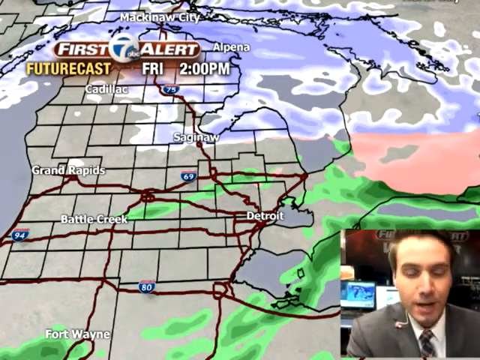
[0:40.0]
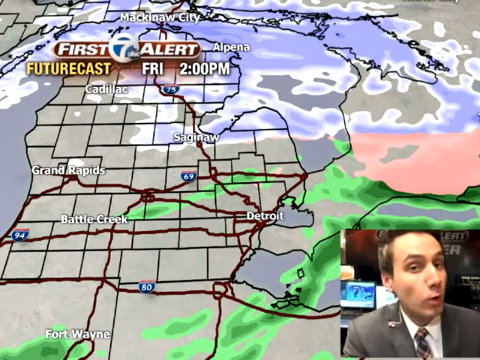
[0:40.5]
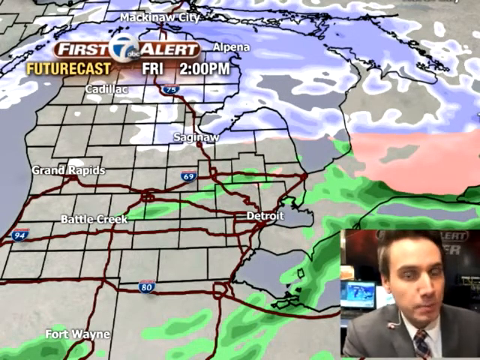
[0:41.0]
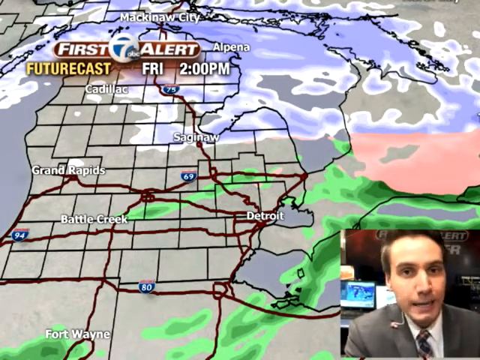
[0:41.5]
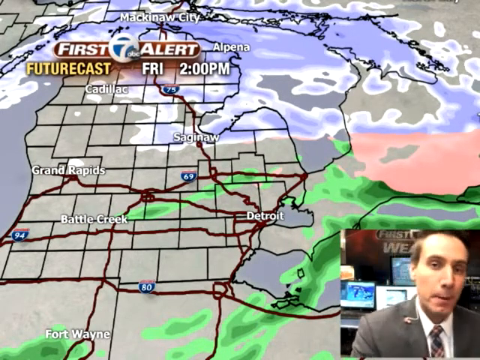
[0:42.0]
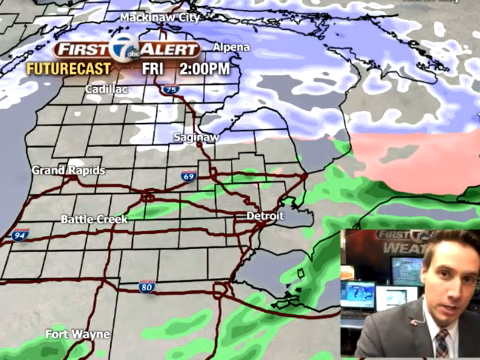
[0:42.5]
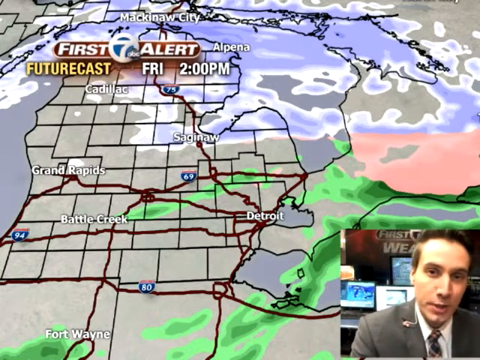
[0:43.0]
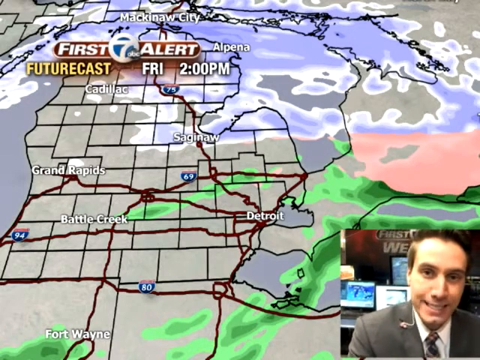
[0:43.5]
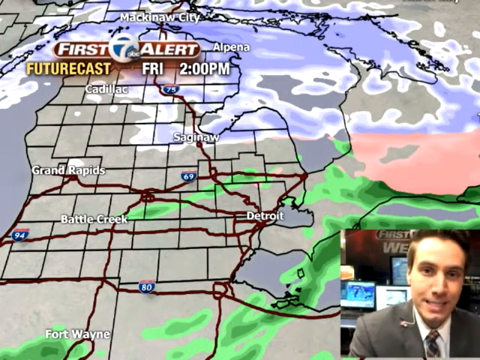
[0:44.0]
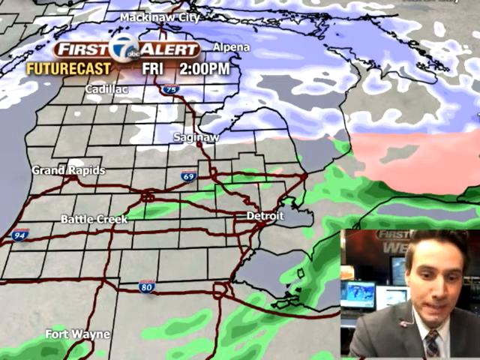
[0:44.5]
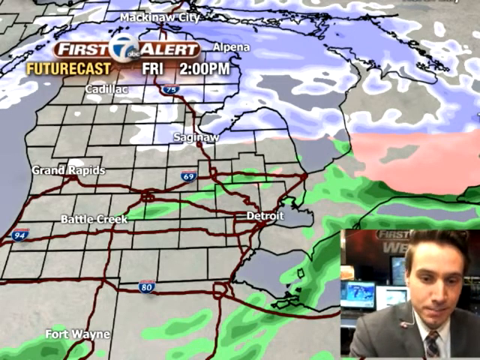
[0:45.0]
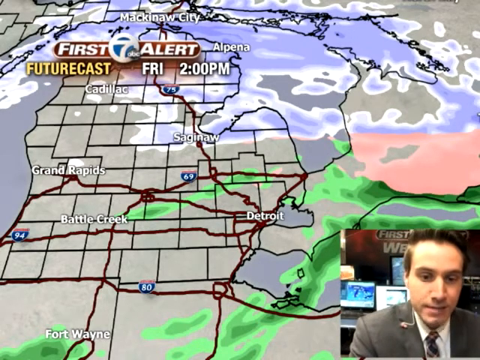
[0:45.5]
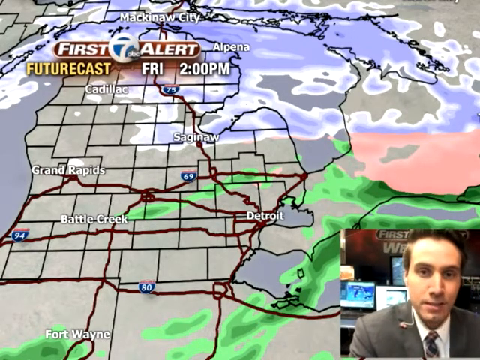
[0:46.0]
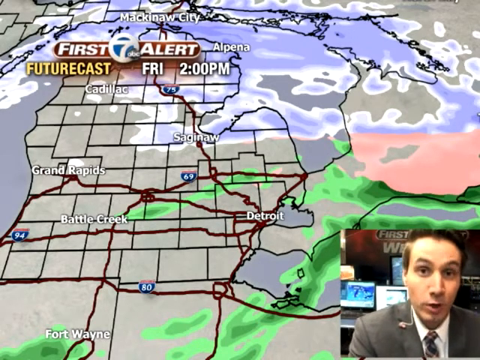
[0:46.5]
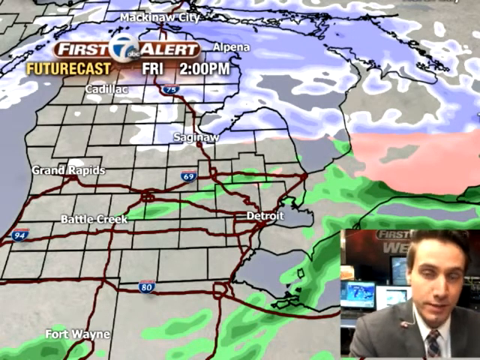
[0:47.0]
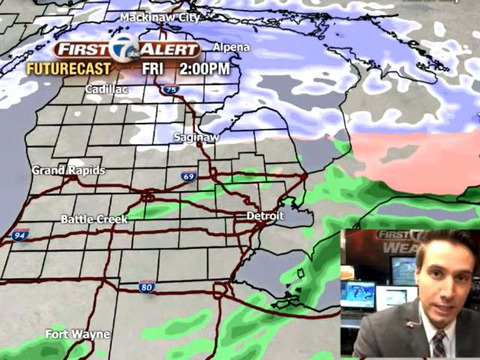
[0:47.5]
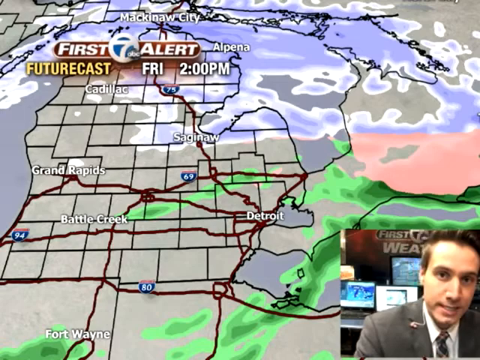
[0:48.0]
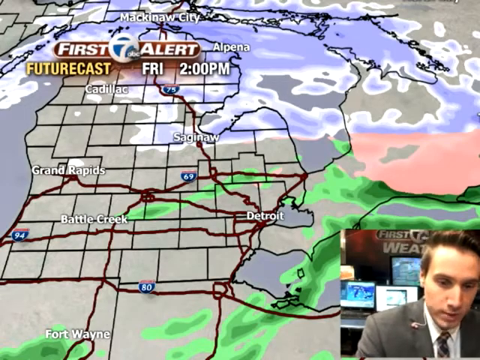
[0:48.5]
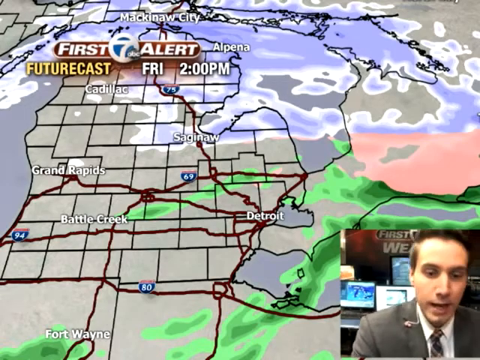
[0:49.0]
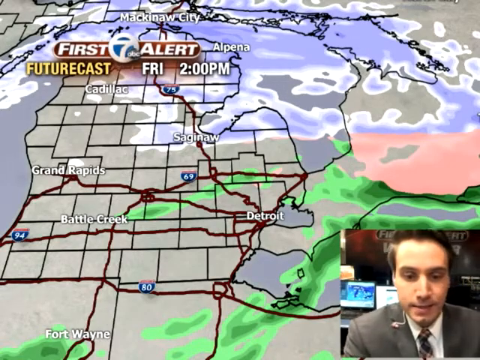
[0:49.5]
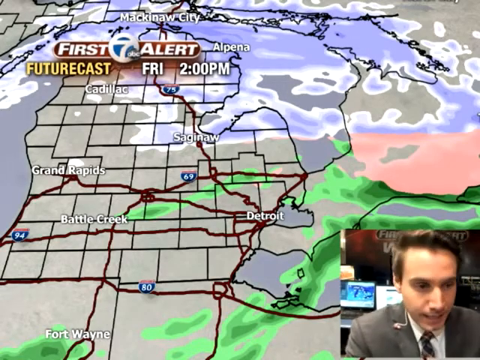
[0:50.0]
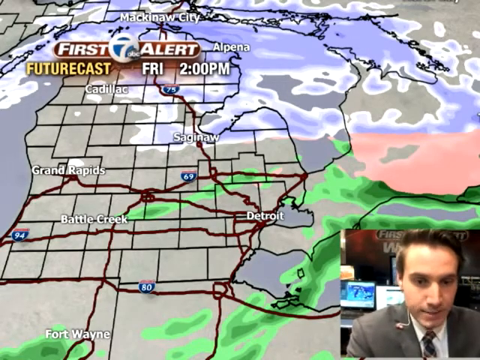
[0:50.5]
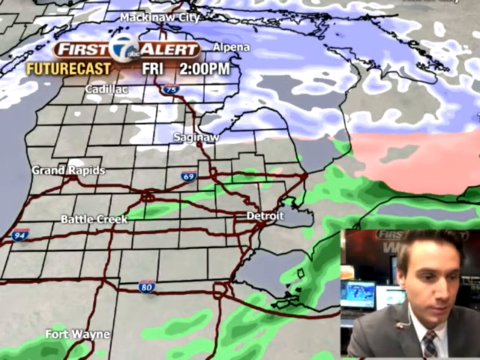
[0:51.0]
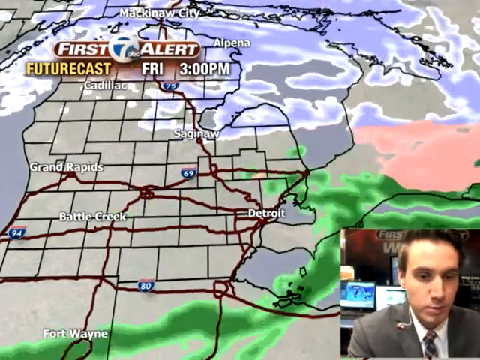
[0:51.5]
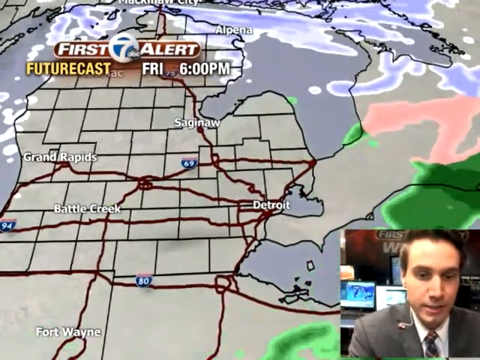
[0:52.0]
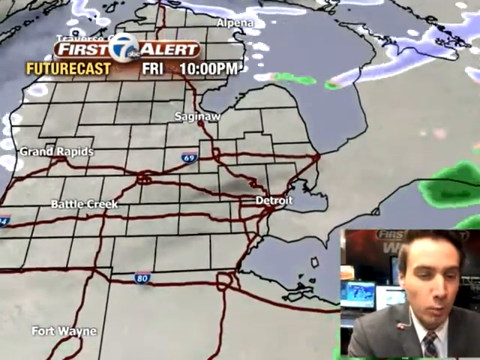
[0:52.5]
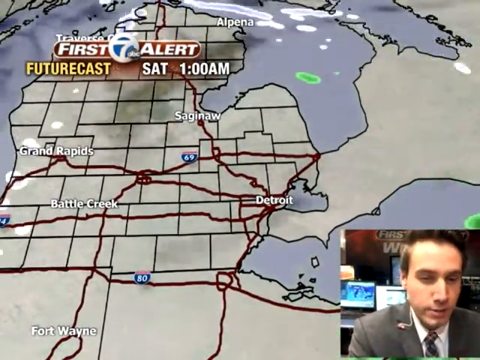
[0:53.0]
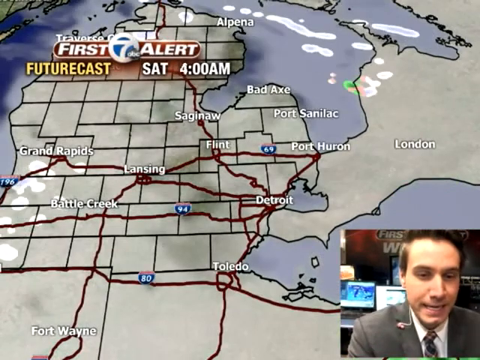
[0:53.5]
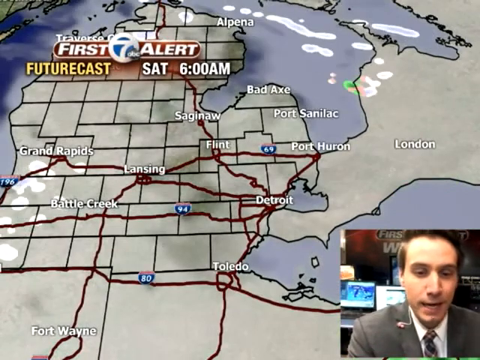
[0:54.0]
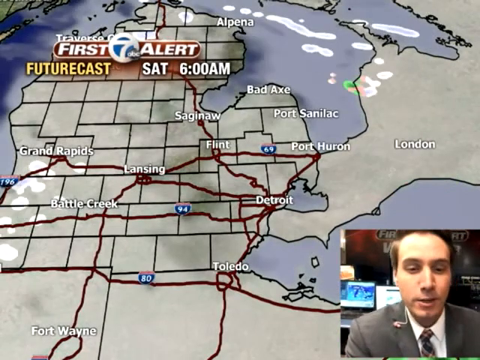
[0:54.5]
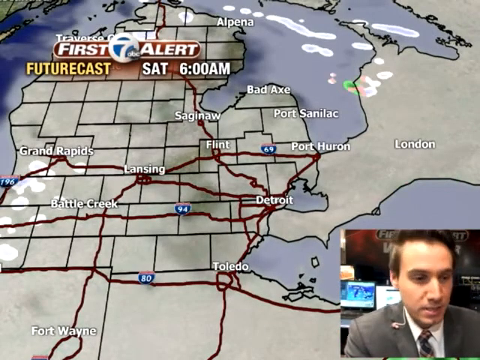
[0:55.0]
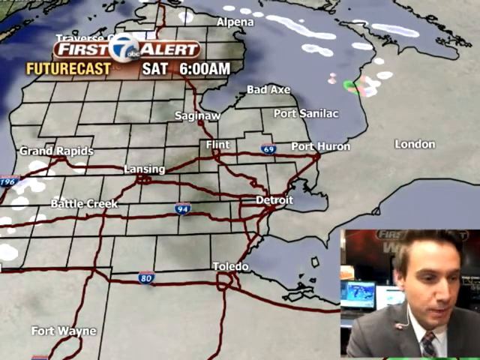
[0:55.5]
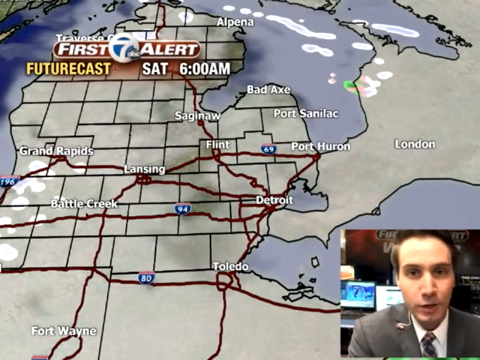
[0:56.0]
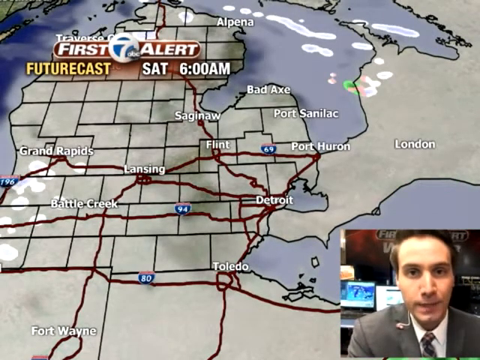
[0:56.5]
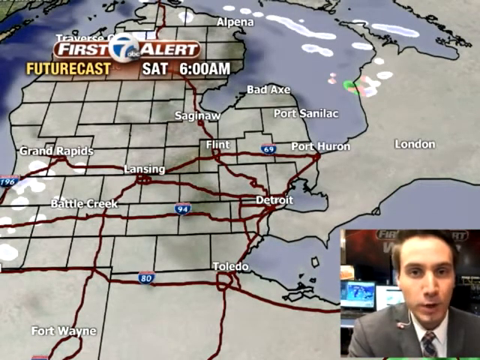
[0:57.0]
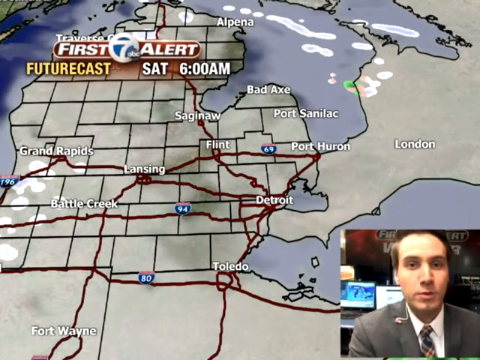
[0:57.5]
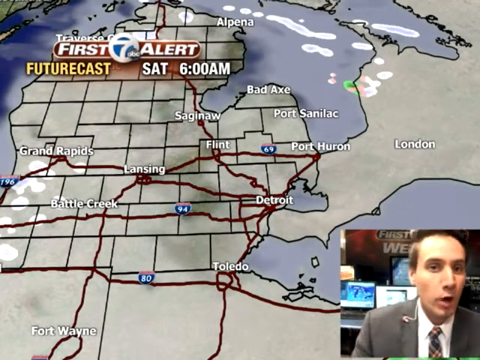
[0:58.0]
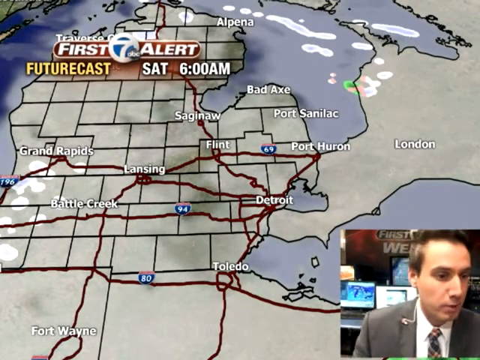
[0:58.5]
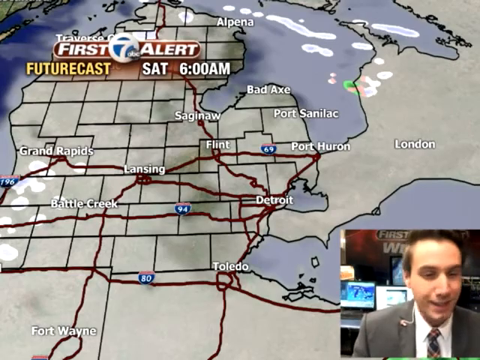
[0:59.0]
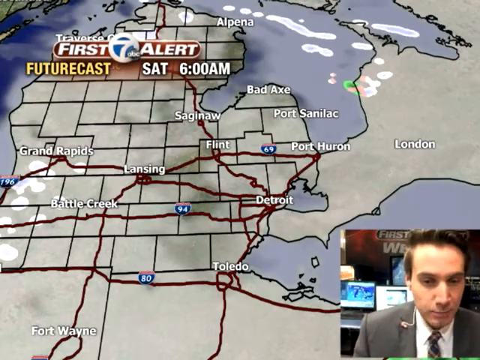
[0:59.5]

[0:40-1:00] Albania and London appear on the map. The forecast apparently covers northern or western countries and the weather expected there over the next 12 hours, shown as a futurecast.